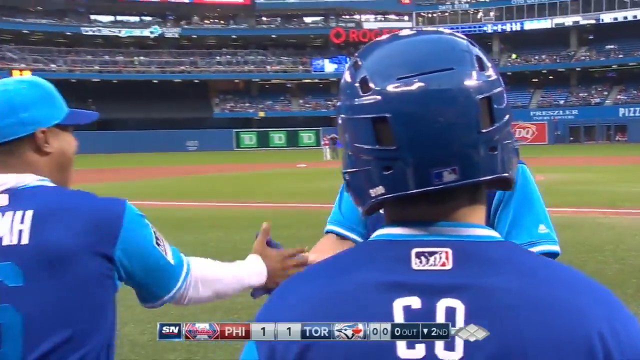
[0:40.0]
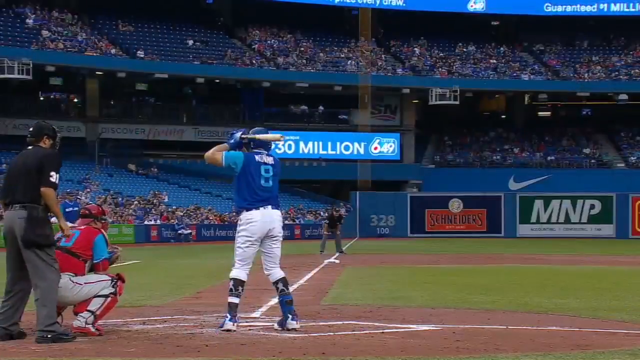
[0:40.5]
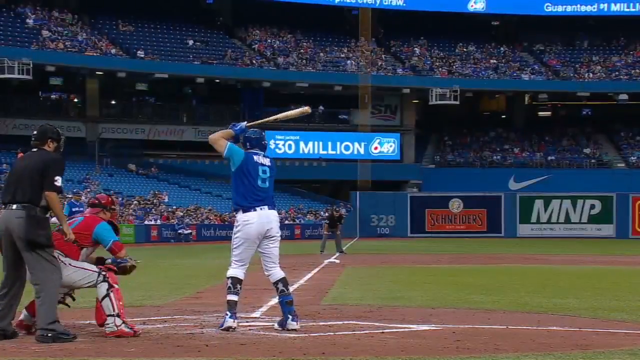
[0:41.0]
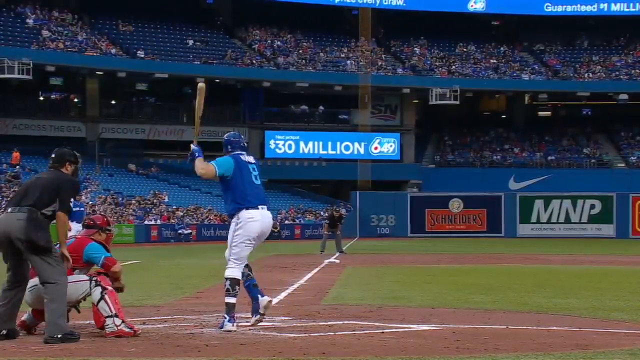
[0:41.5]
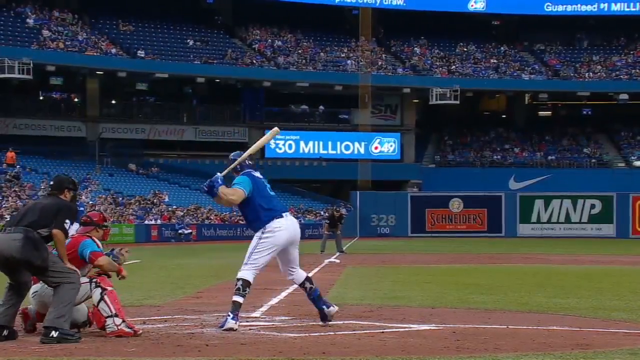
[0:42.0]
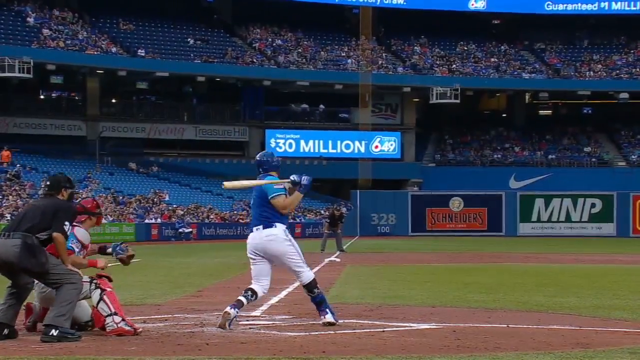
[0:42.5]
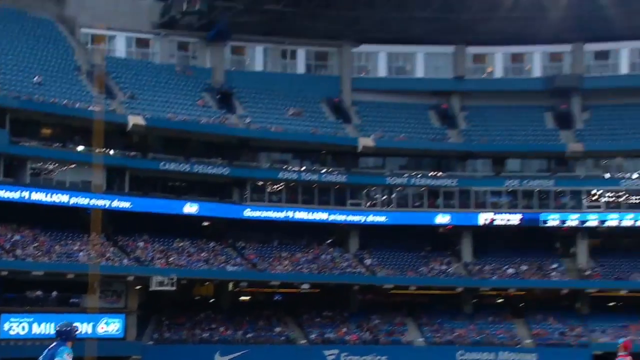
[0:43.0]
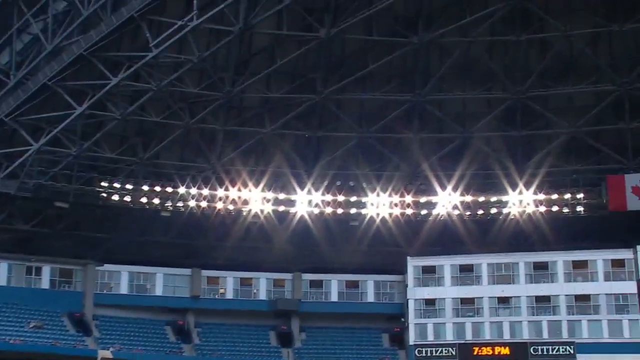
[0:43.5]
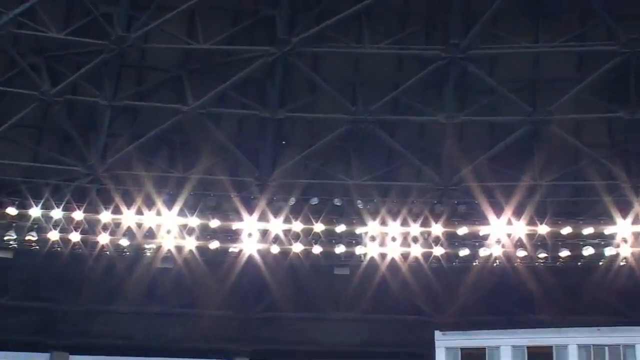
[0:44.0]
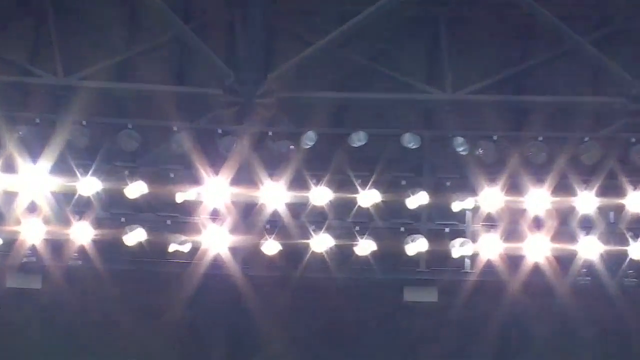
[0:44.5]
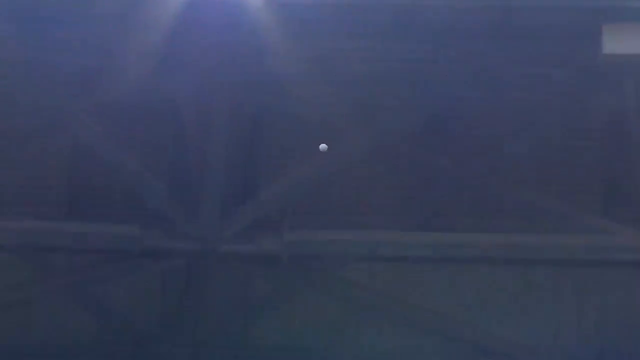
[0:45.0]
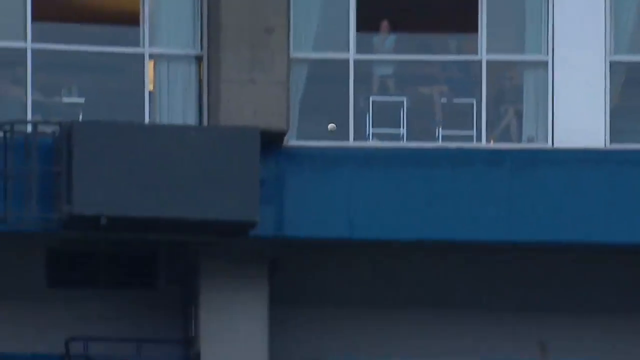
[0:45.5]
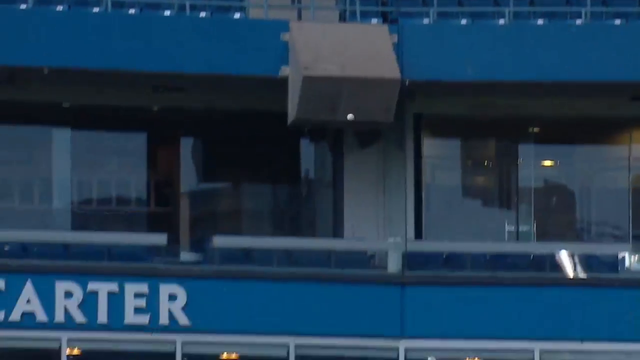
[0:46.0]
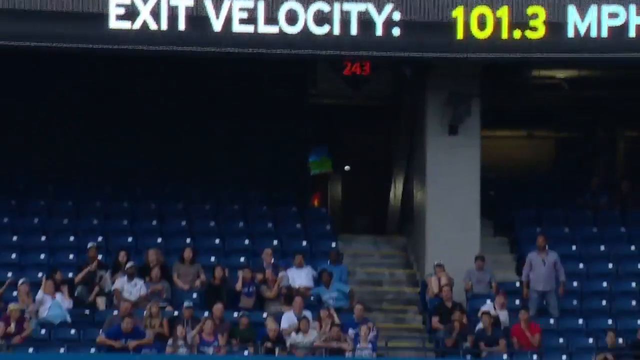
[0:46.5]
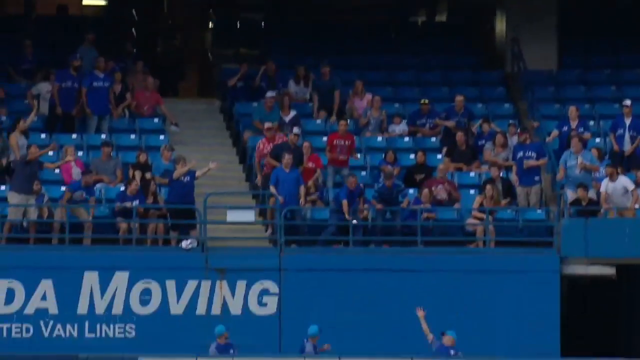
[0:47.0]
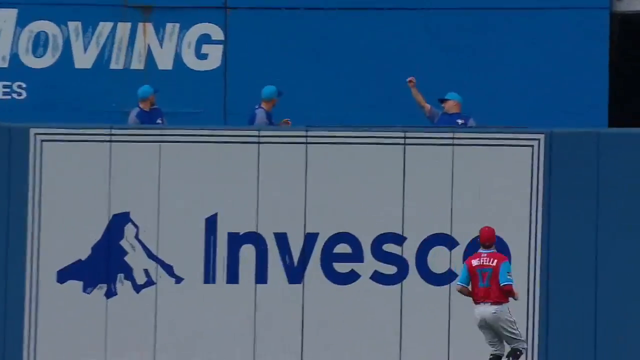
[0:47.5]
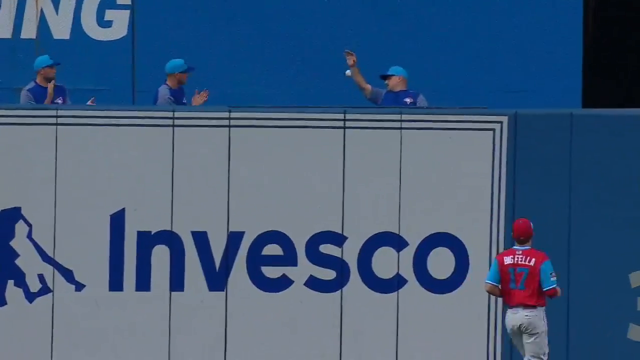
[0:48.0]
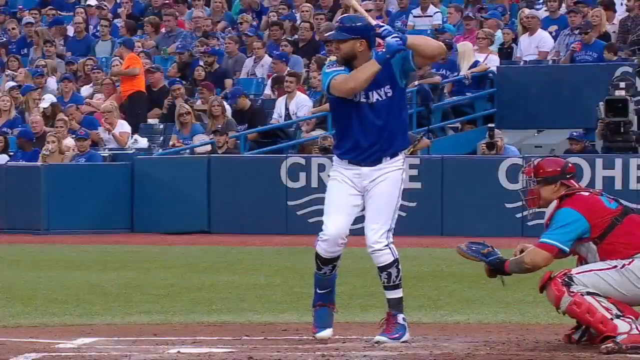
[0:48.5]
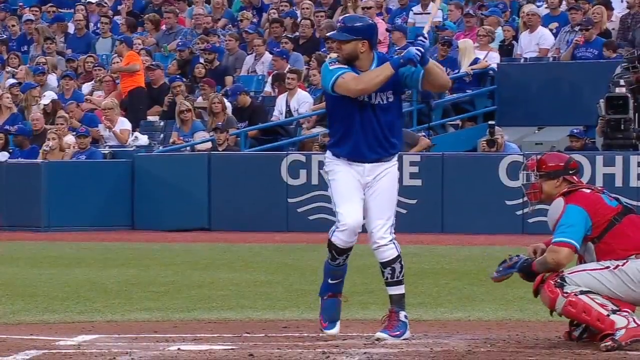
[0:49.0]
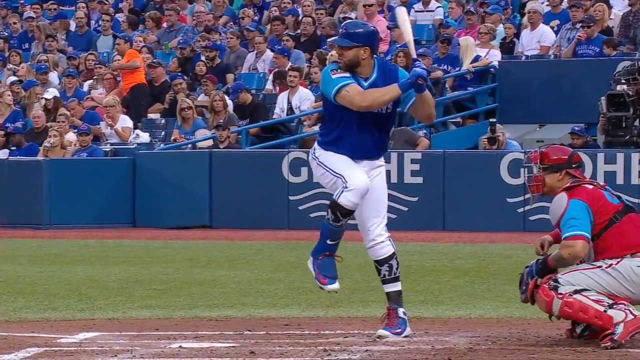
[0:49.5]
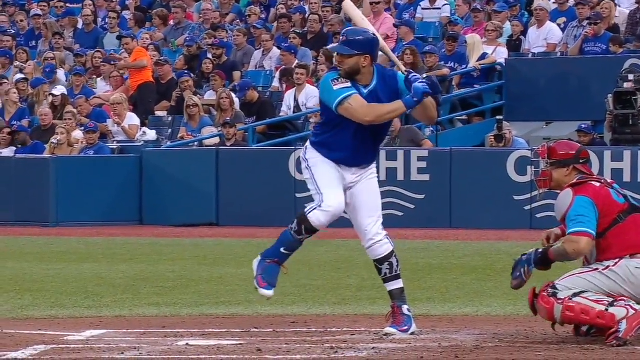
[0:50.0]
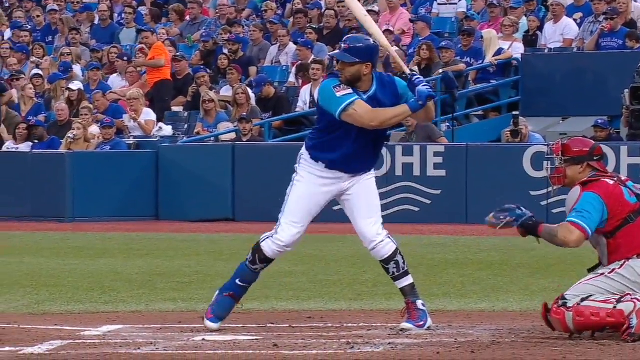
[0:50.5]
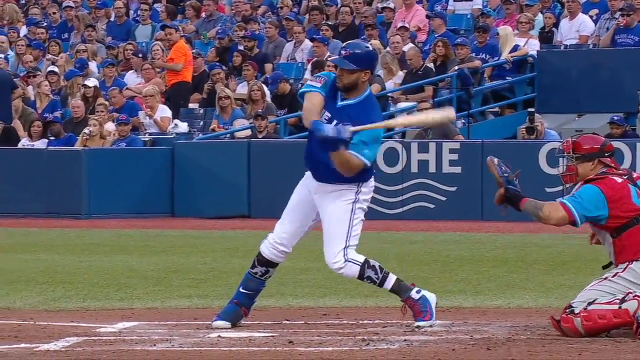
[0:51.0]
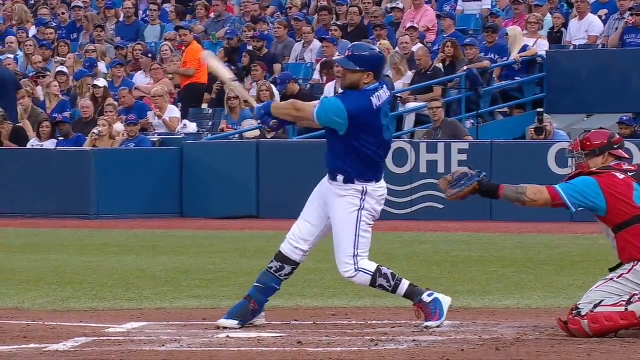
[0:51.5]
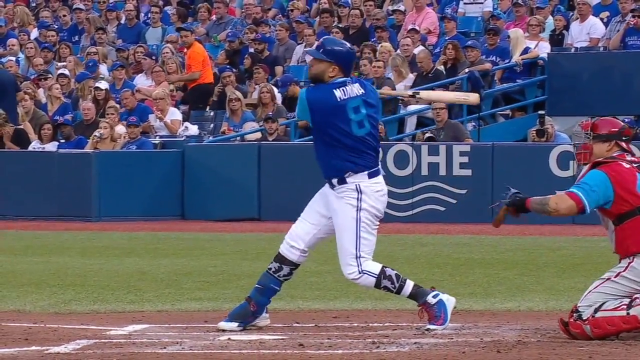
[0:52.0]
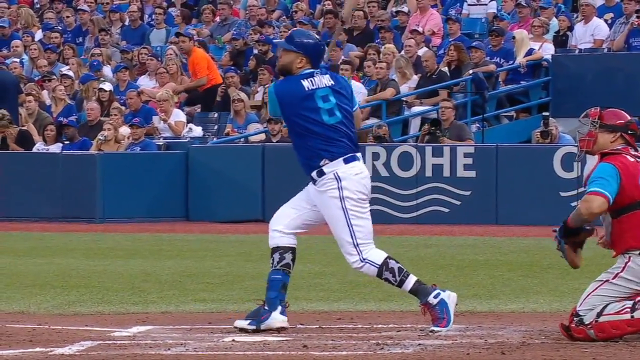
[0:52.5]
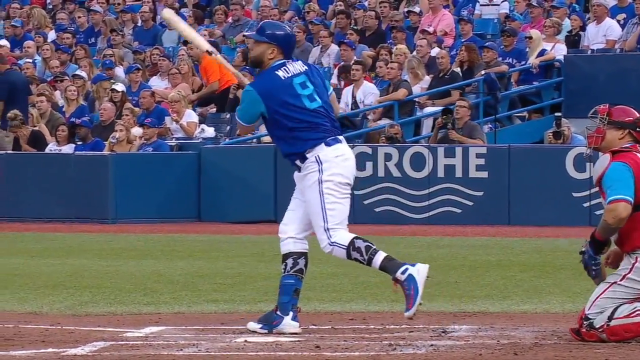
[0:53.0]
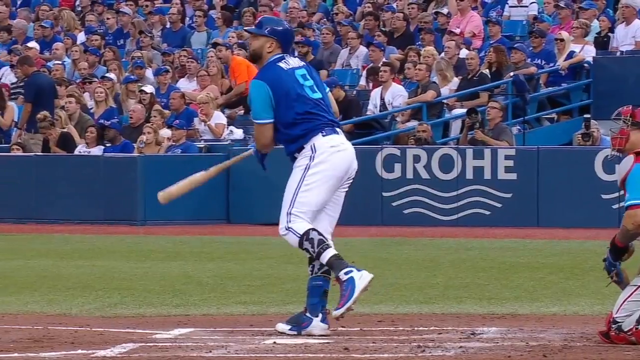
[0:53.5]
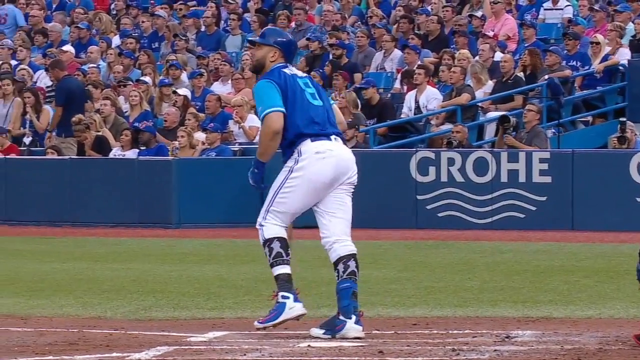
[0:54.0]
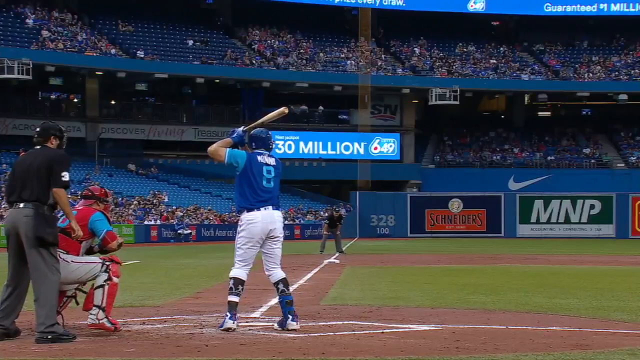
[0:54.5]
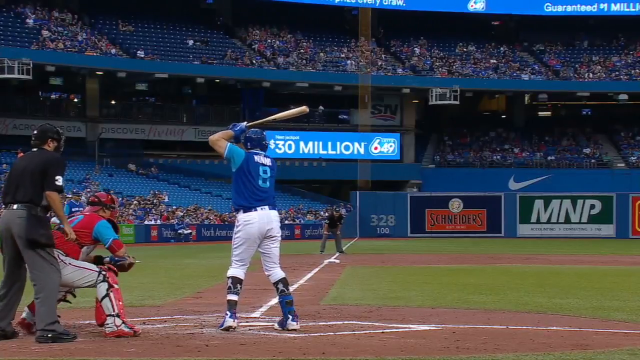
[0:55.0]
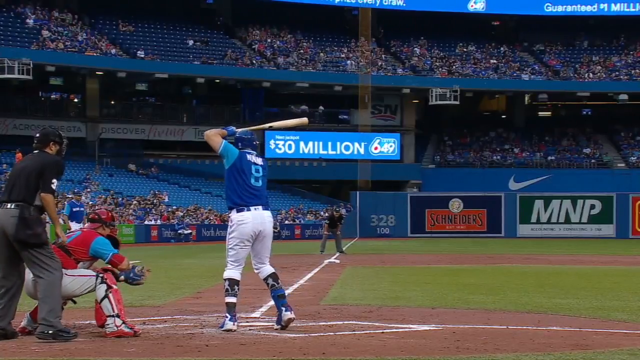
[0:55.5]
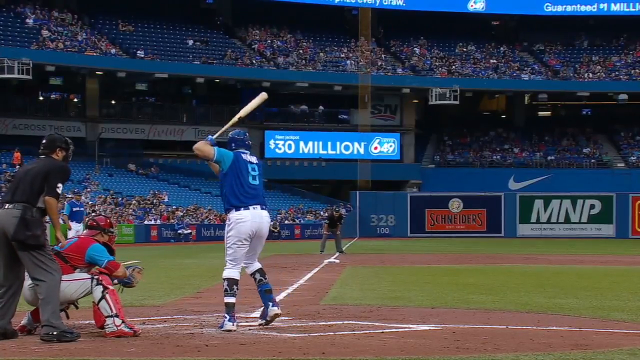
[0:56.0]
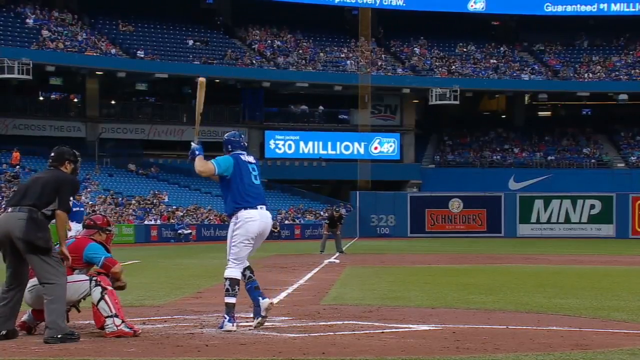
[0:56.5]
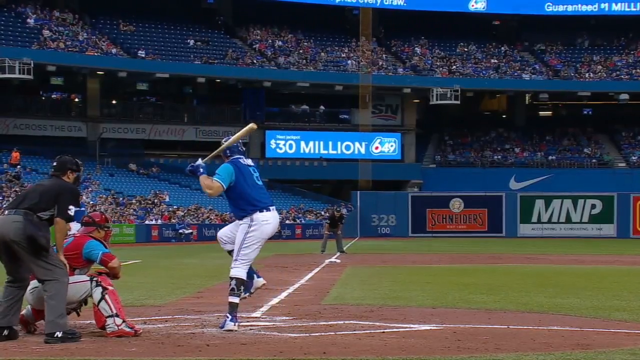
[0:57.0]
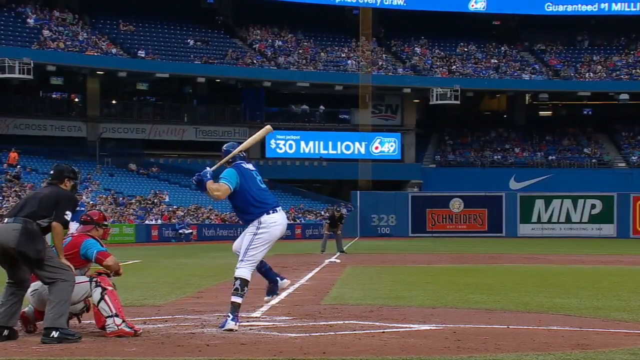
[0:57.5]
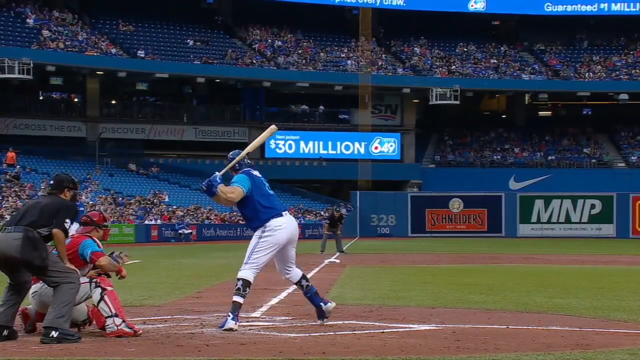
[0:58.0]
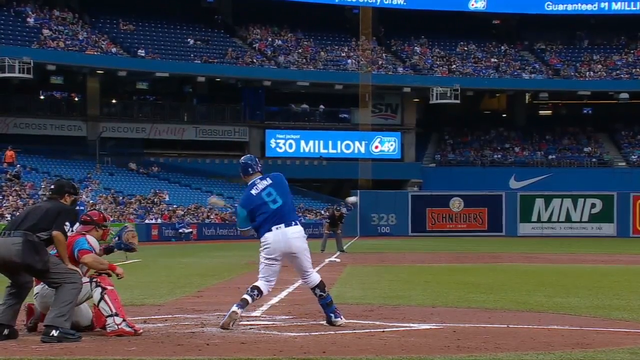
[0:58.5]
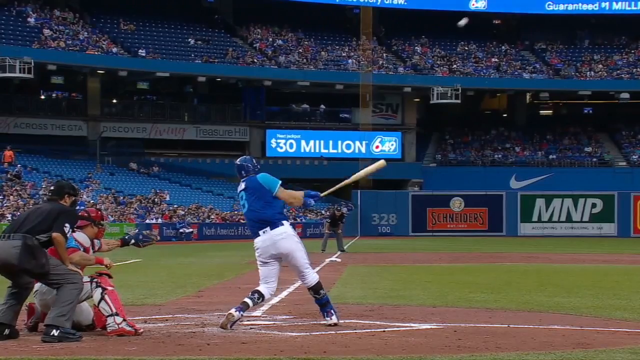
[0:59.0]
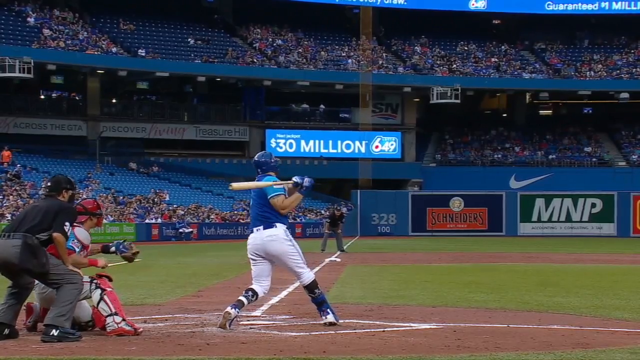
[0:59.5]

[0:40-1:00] A baseball player gets a handshake from one of his teammates, and then a replay of his home run is shown, followed by the same moment from another angle, repeated several times. The replays show how he swings, sticking his left leg out, with the bat going back behind him, and the ball going way up into the air. The crowd has about three levels: a lower level, a middle level, and higher seats at the top, and there are some screens and lights. The ball drops over the padding at the back for a home run. He appears to be wearing number nine on his Blue Jays jersey.